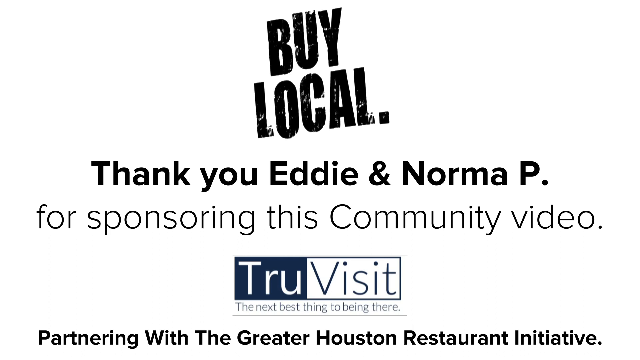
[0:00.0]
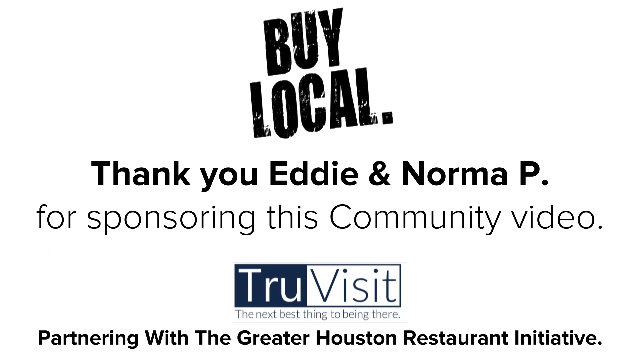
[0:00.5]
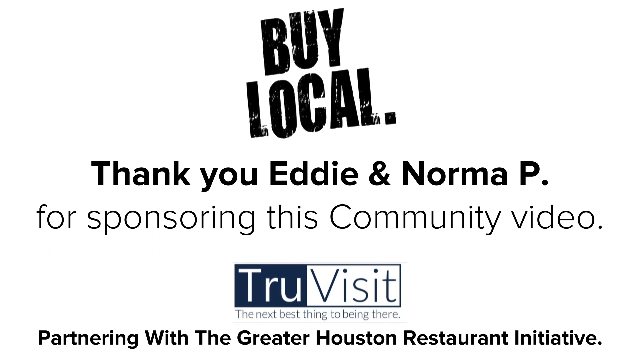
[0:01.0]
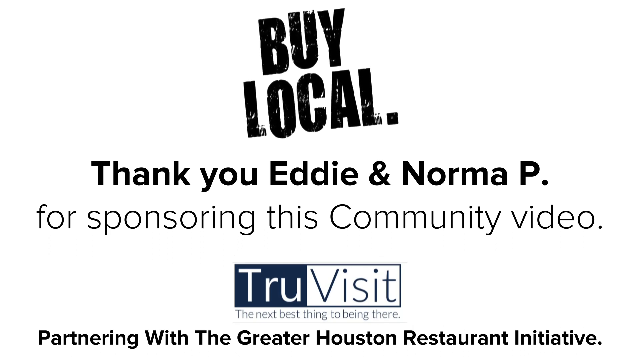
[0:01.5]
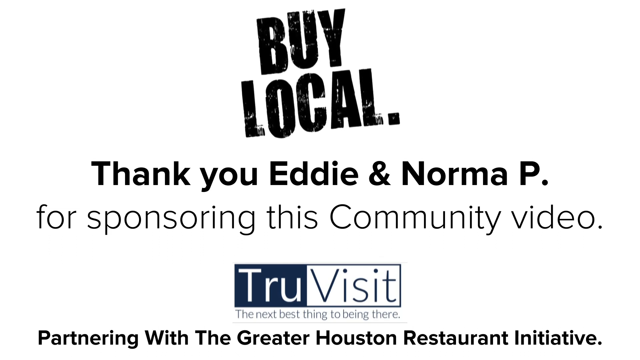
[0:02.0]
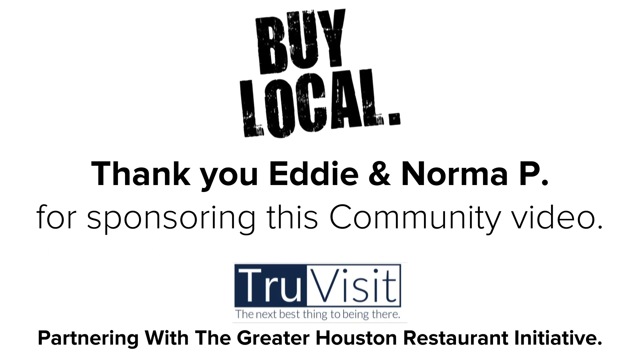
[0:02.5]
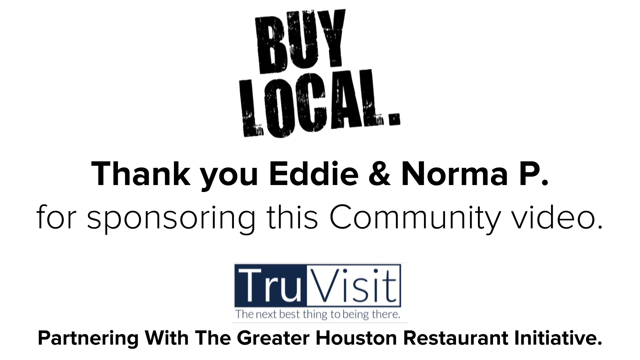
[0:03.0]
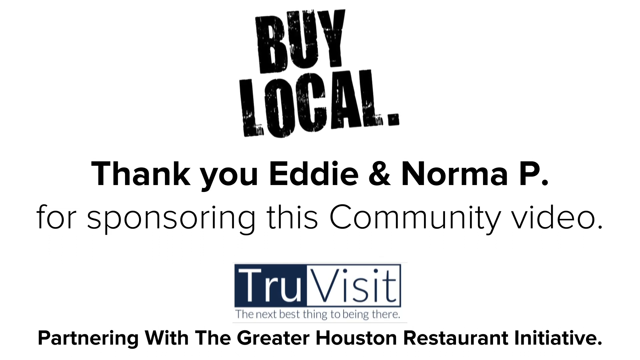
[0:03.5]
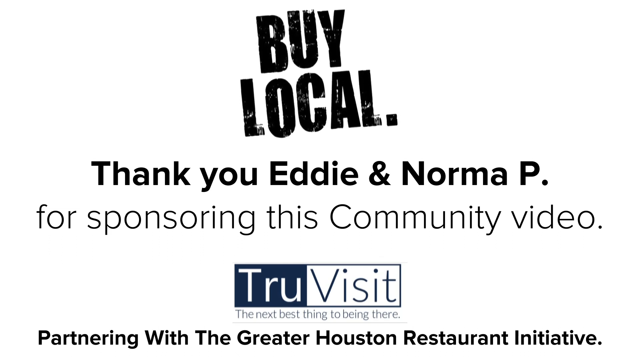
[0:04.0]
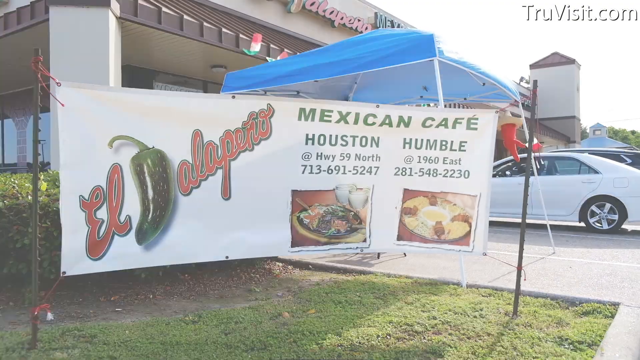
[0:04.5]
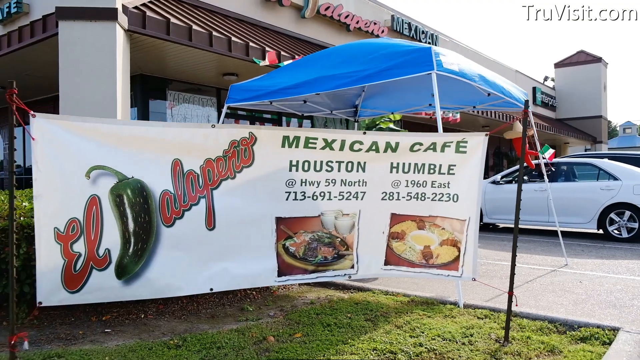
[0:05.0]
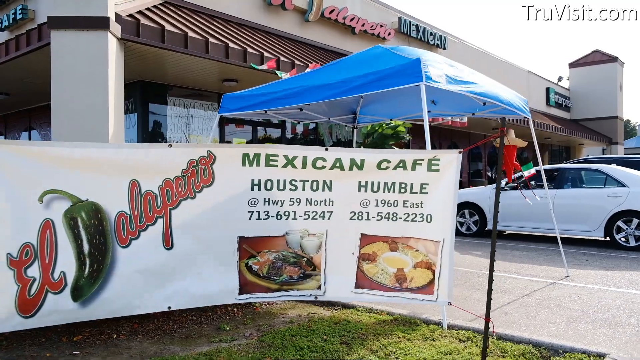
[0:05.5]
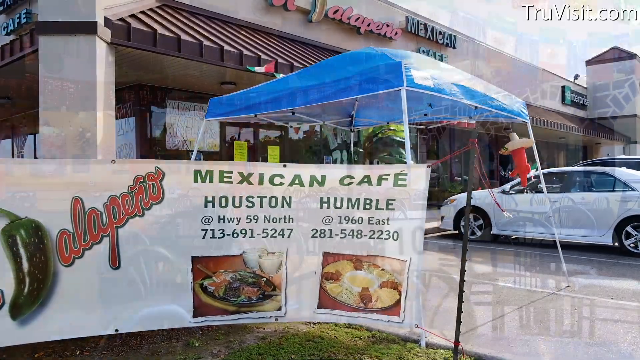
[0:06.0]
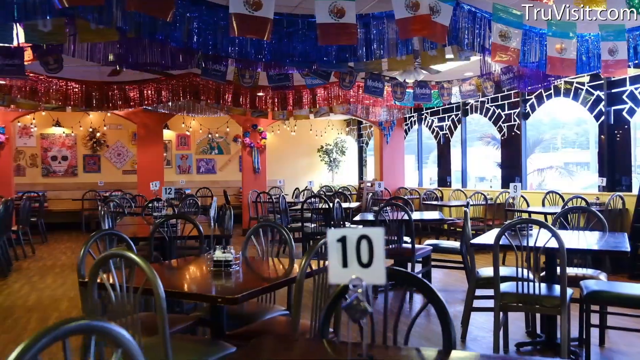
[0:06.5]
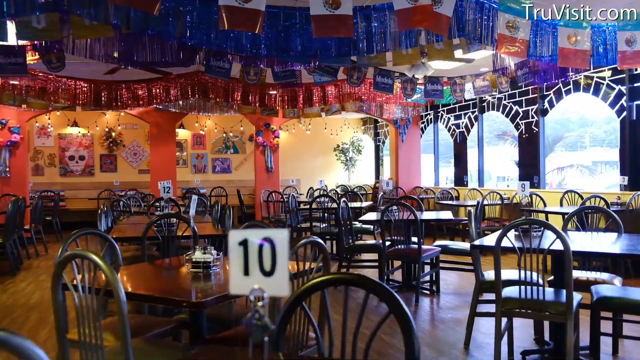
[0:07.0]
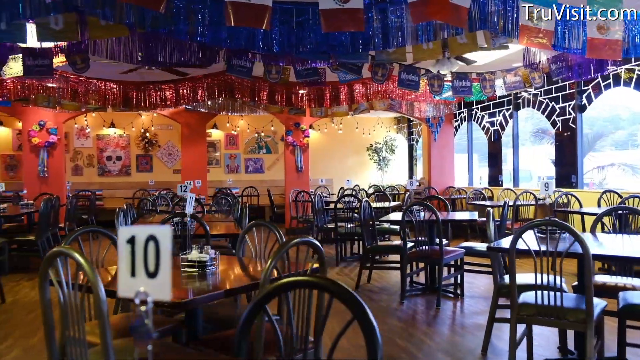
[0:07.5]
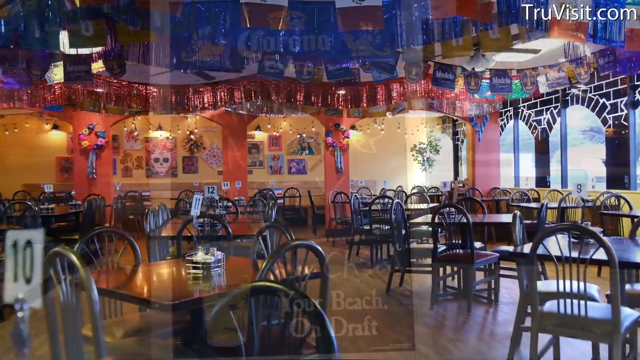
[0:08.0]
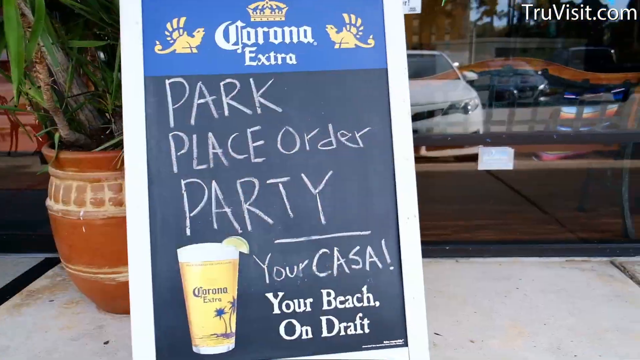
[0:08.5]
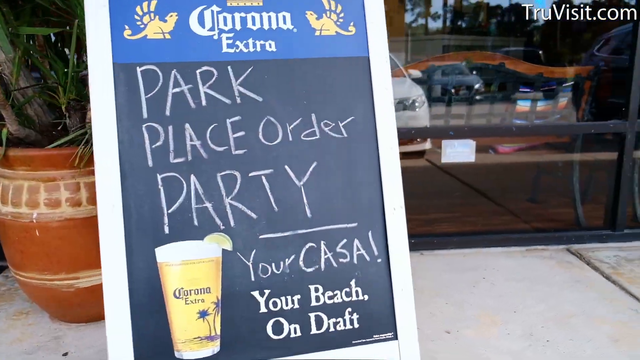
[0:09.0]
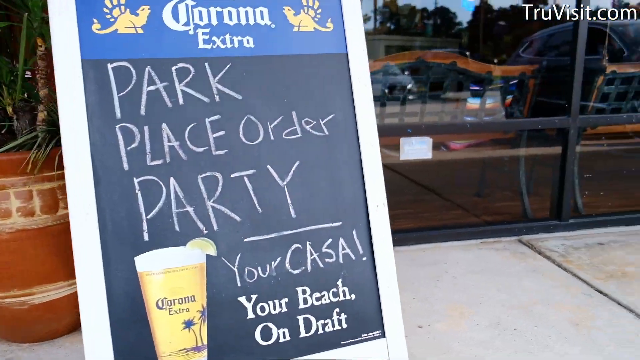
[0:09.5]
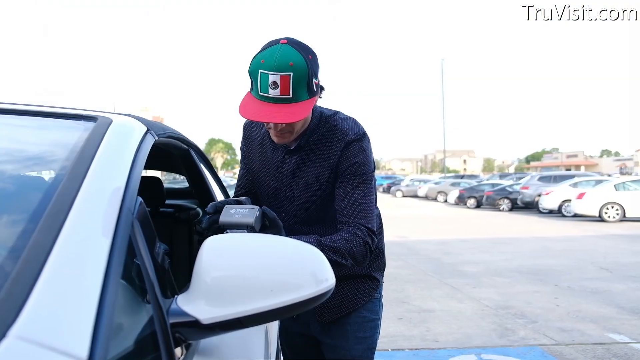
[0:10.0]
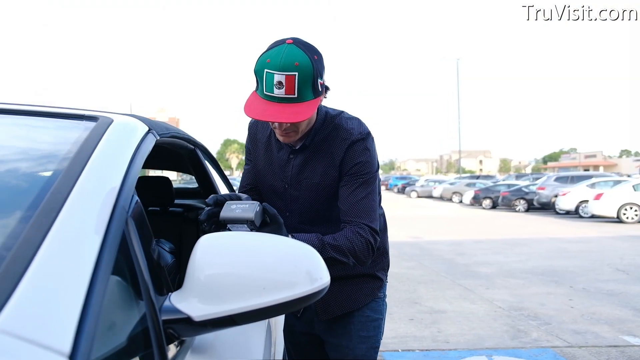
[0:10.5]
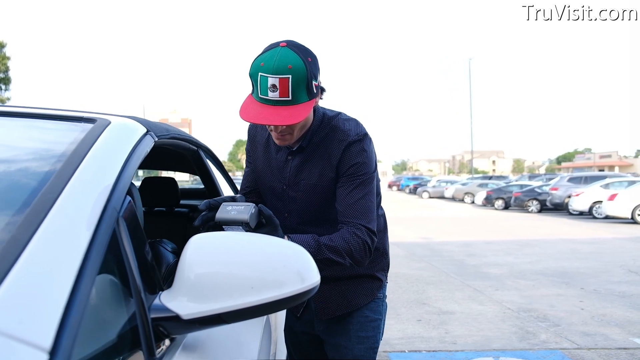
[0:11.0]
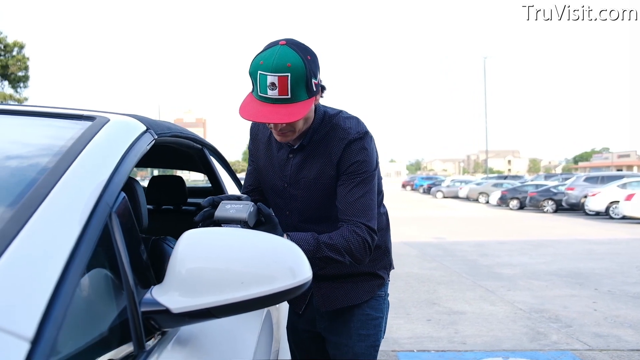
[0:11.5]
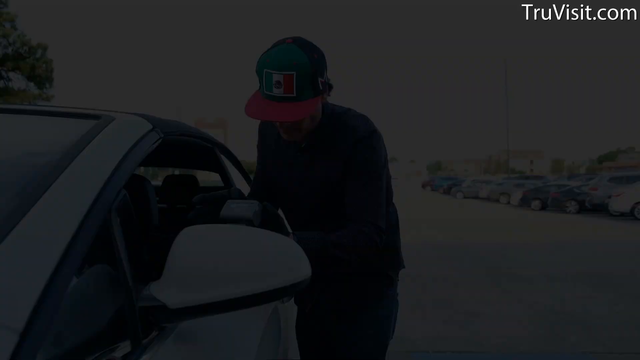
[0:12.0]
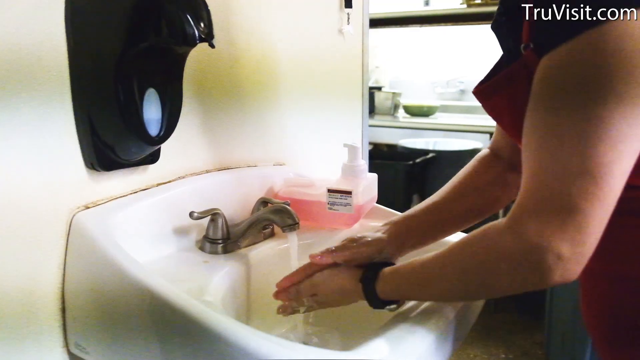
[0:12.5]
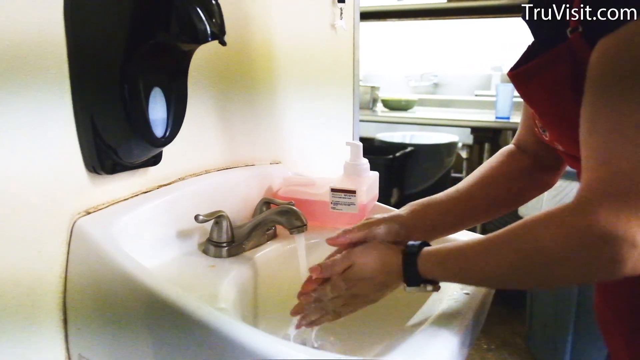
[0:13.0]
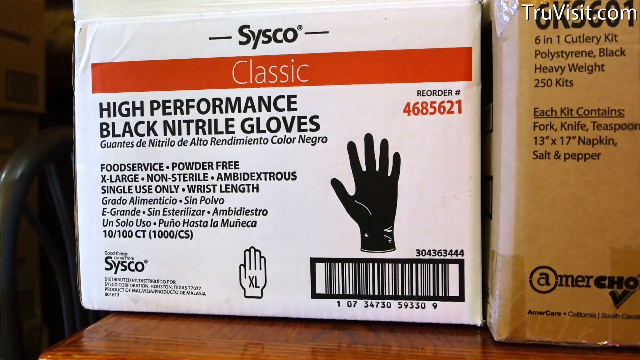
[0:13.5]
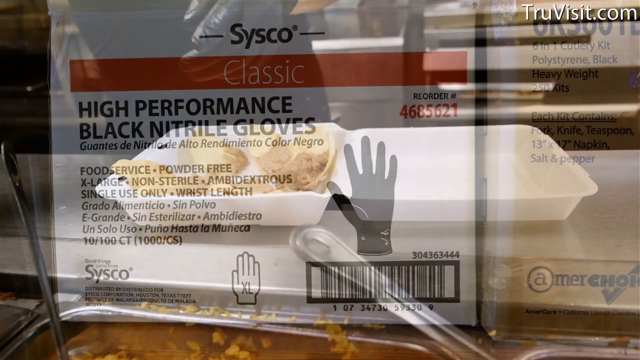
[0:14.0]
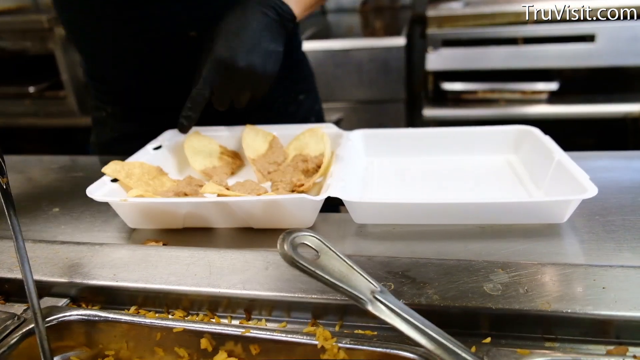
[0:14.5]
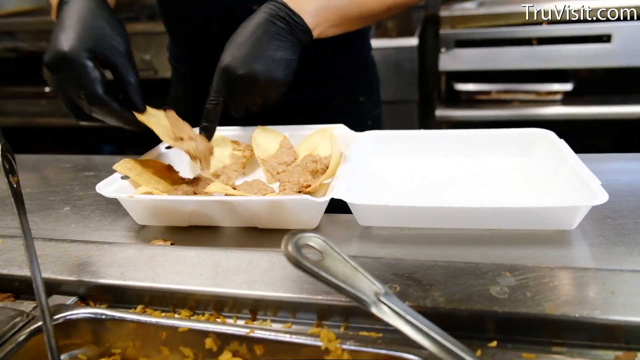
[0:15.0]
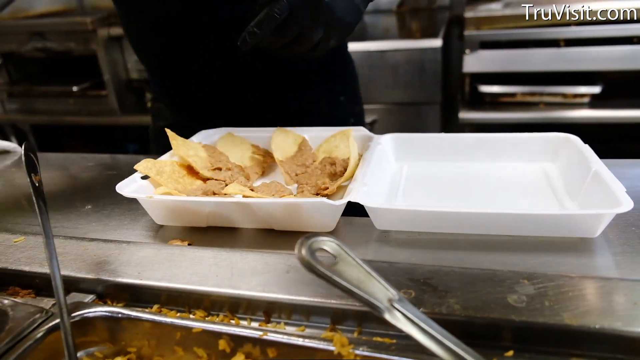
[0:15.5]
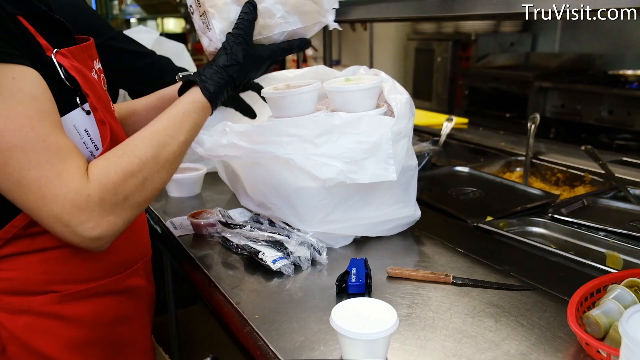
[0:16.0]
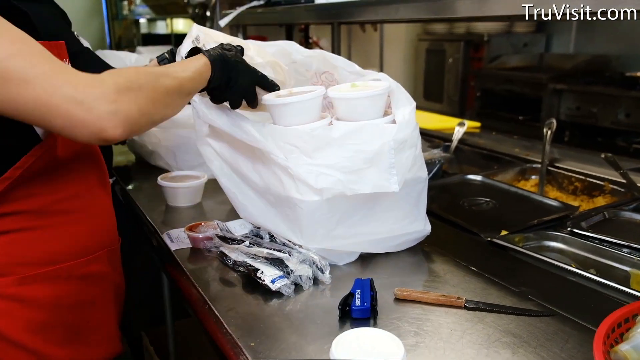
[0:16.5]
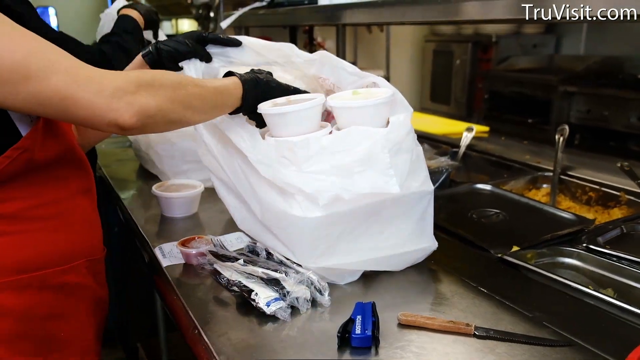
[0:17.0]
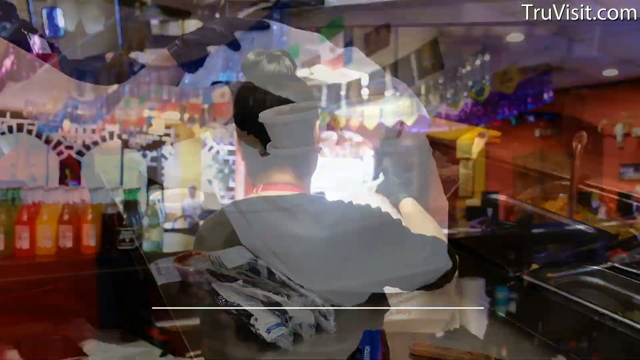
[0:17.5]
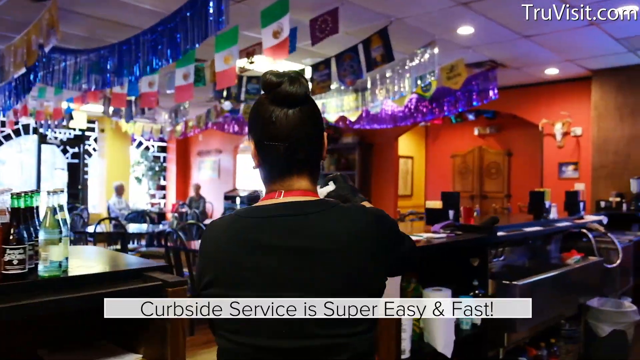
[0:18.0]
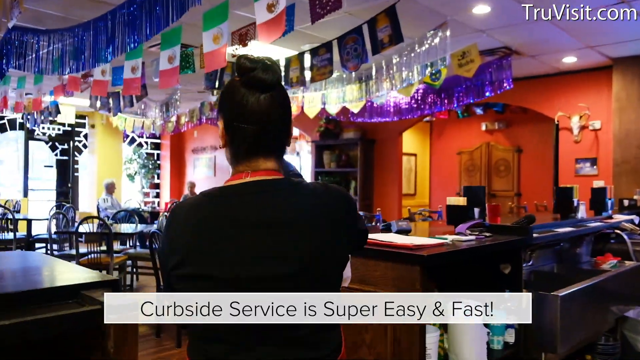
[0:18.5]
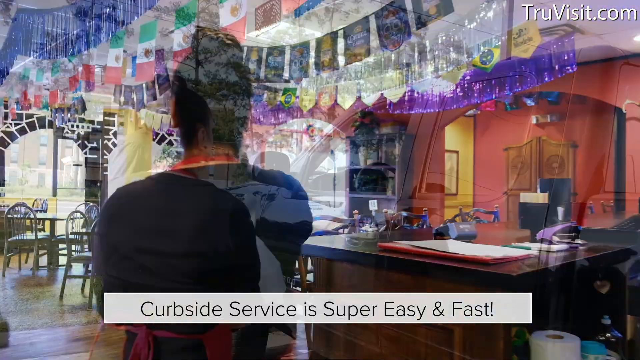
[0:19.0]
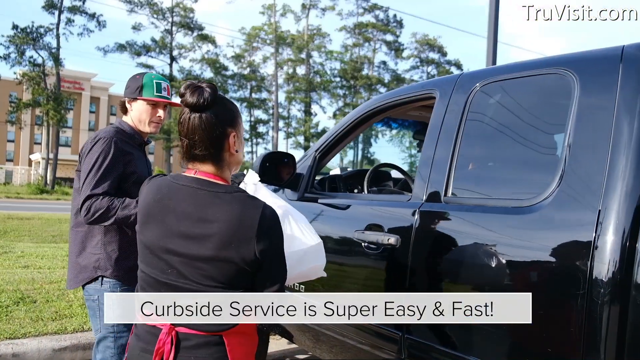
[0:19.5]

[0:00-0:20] On a white background, the screen reads "Buy local. Thank you Eddie & Norma P for sponsoring this community video." Text then reads "true visit the next best thing to being there. Partnering with the Greater Houston Restaurant Initiative." A large white sign outside a restaurant shows the name El Jalapeno, a Mexican cafe, and appears to list two locations, one in Houston and one in Humble, with the address for both. The sign out front also has a picture of two of the restaurant's dishes. The restaurant looks to be on the corner of a long strip mall and looks like it has quite a bit of space. The view moves inside the restaurant, where there are a lot of tables, and then goes back outside, where a Corona Extra sign reads "park place order party, your casa, your beach on draft." A man wearing a hat appears to be talking to someone in a car. An employee washes their hands, and a box of gloves is visible. An employee prepares a to-go meal, then the to-go meal is bagged and taken out to the customer's car.